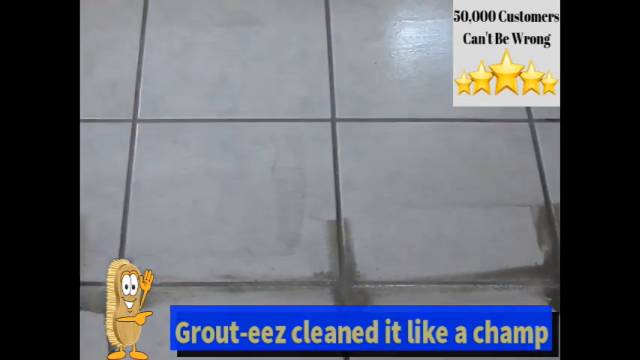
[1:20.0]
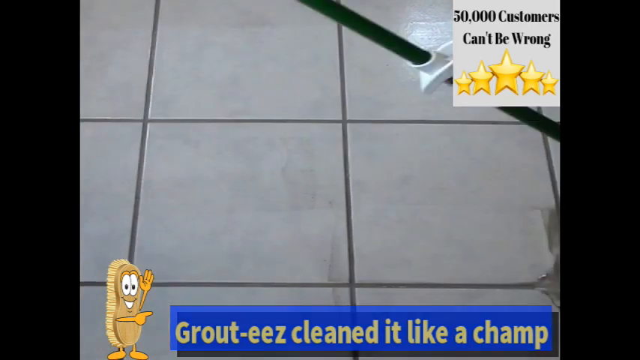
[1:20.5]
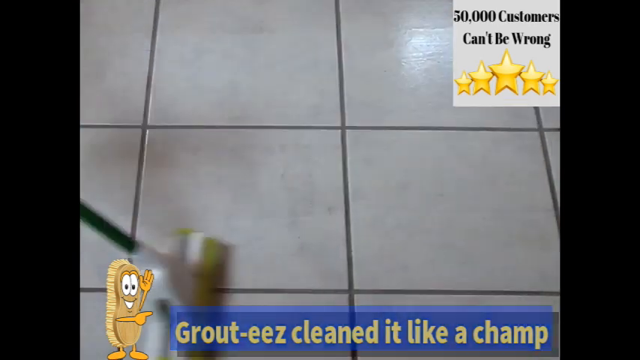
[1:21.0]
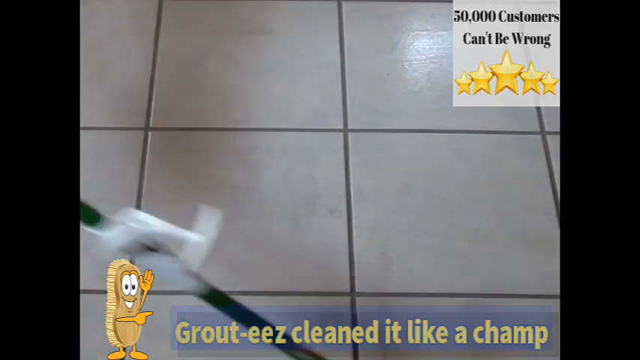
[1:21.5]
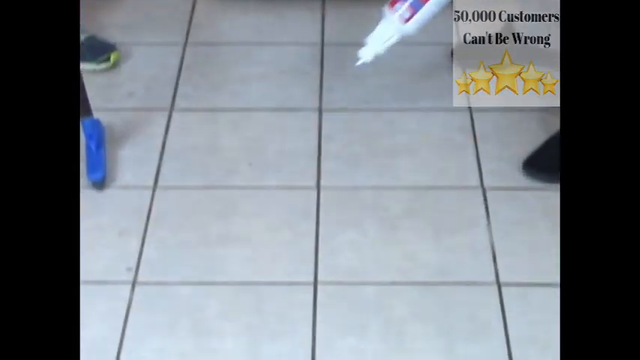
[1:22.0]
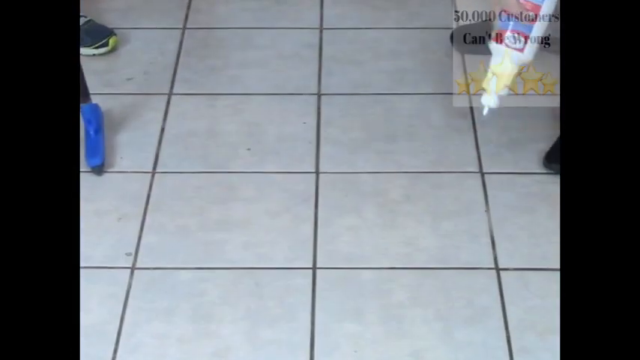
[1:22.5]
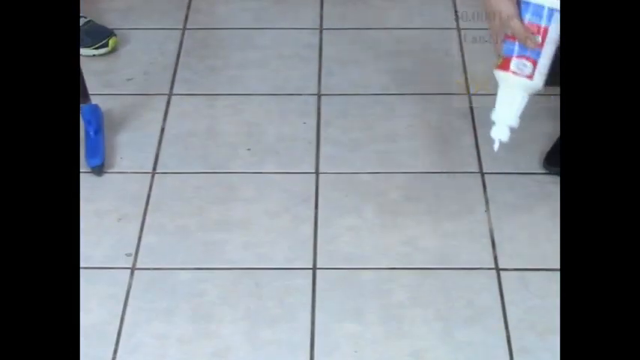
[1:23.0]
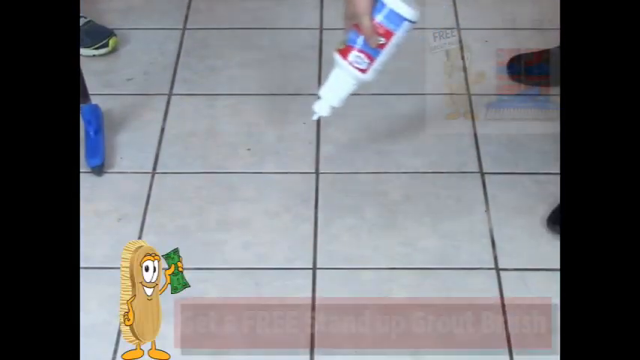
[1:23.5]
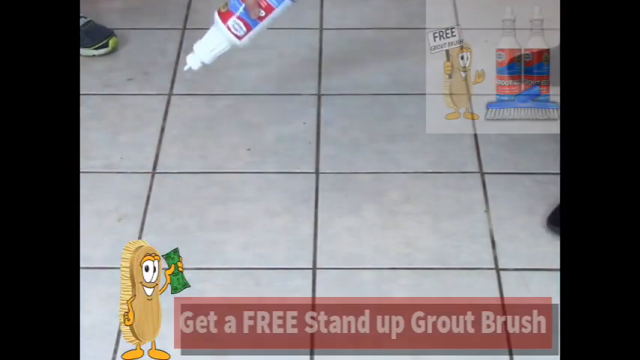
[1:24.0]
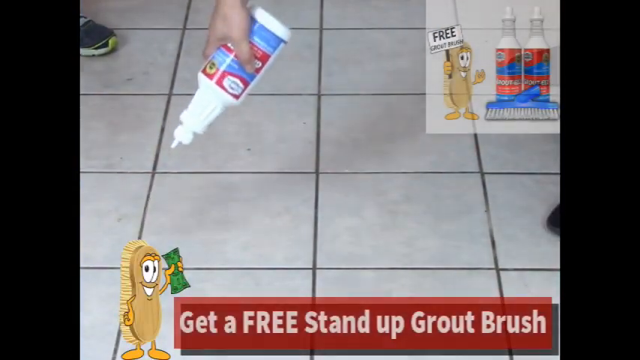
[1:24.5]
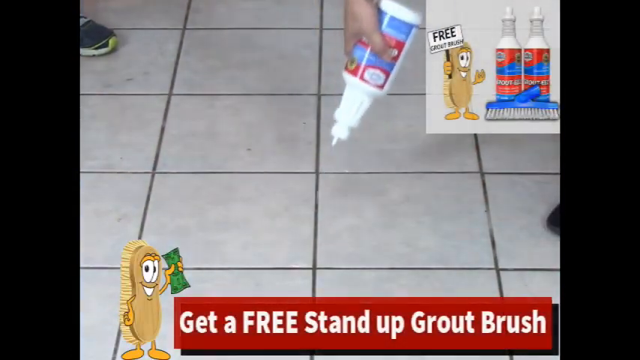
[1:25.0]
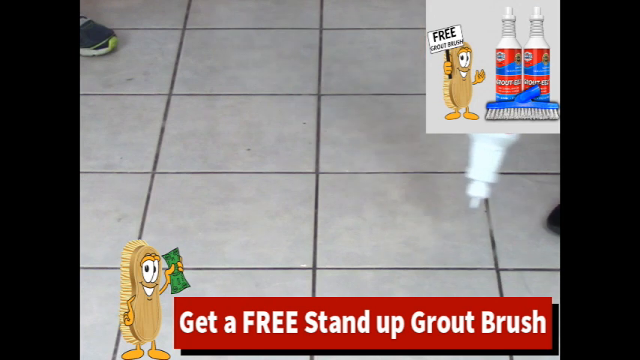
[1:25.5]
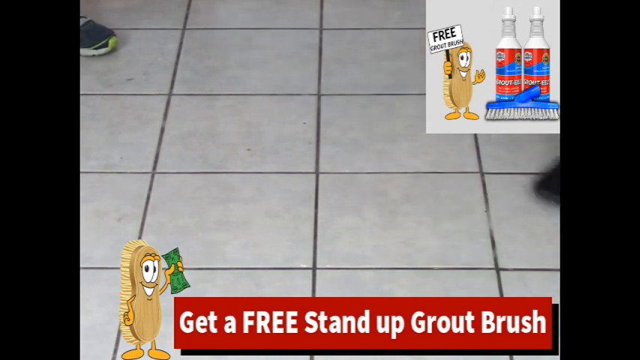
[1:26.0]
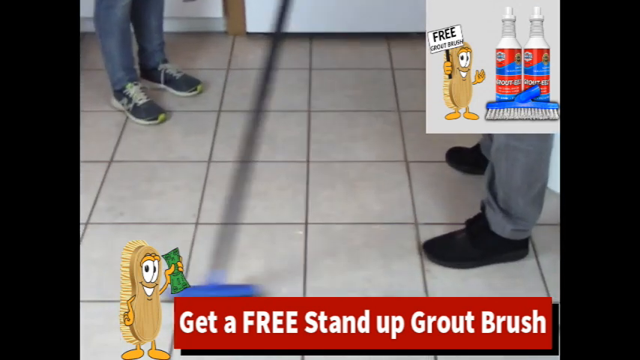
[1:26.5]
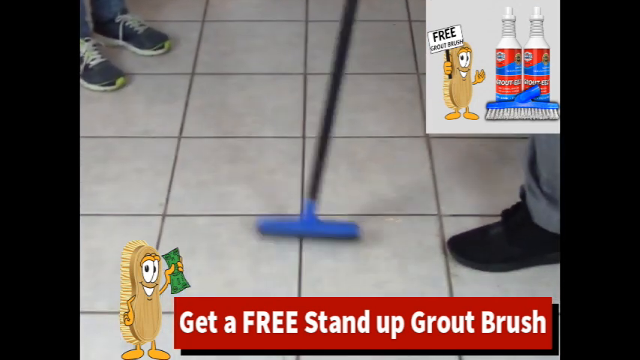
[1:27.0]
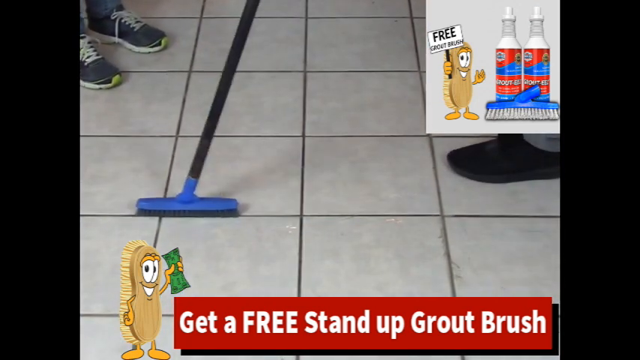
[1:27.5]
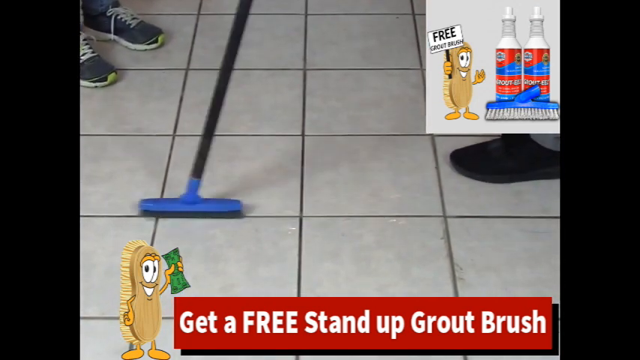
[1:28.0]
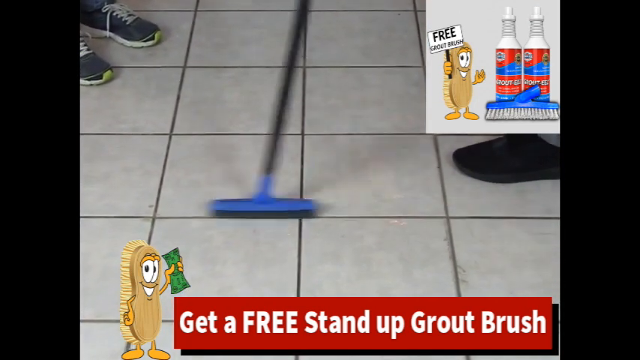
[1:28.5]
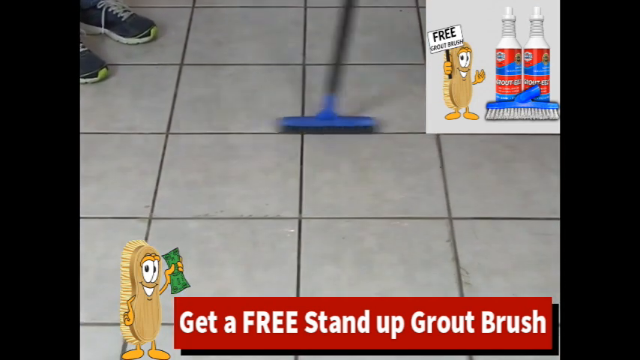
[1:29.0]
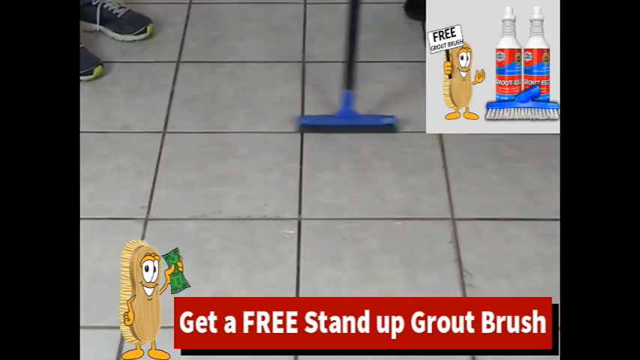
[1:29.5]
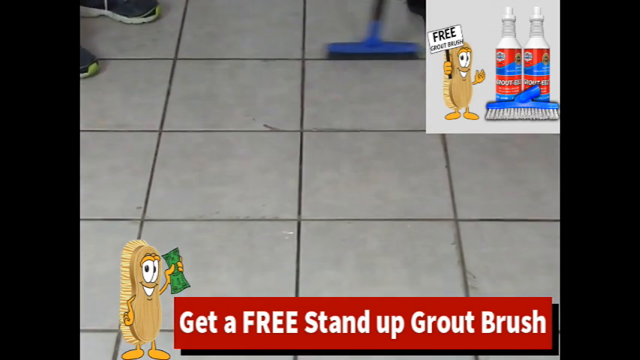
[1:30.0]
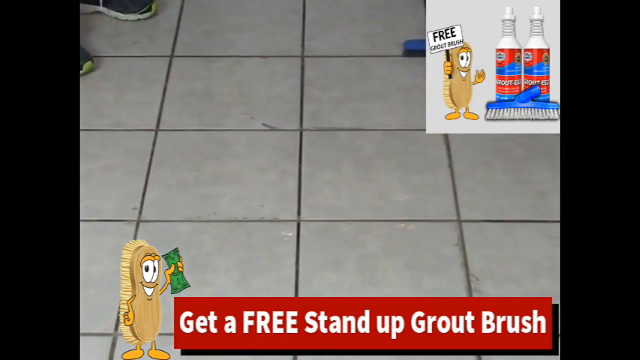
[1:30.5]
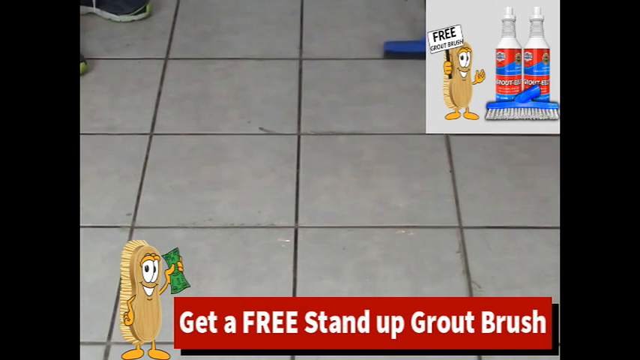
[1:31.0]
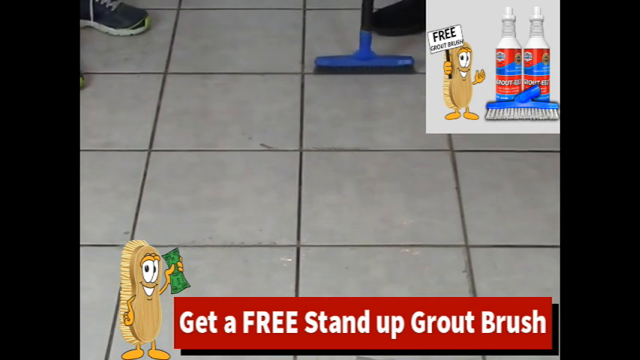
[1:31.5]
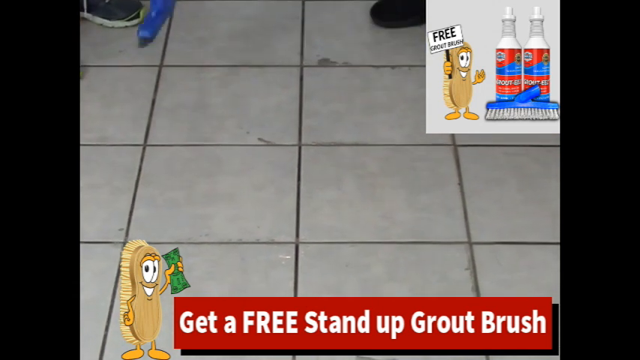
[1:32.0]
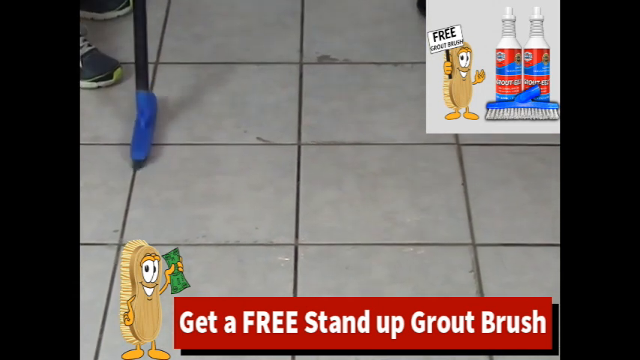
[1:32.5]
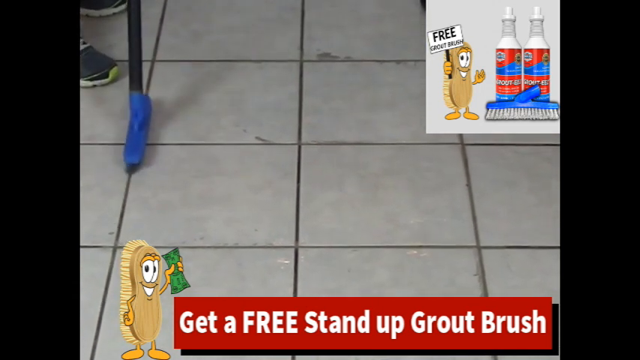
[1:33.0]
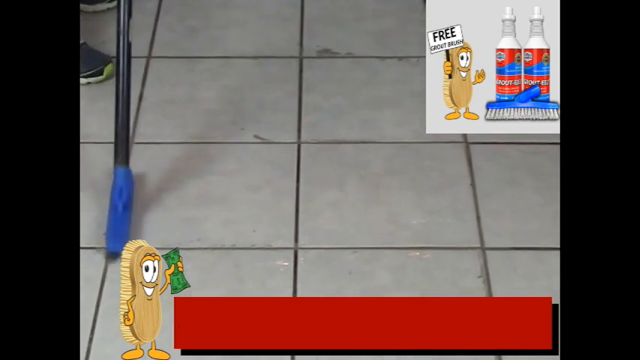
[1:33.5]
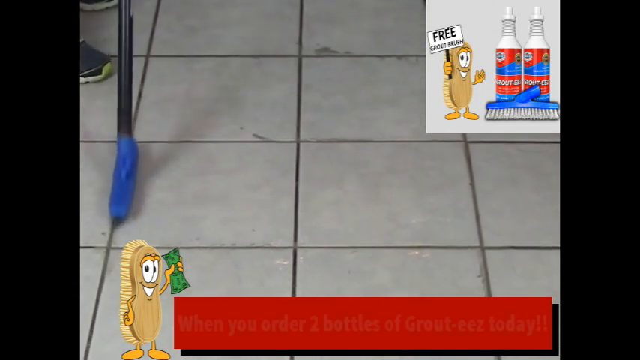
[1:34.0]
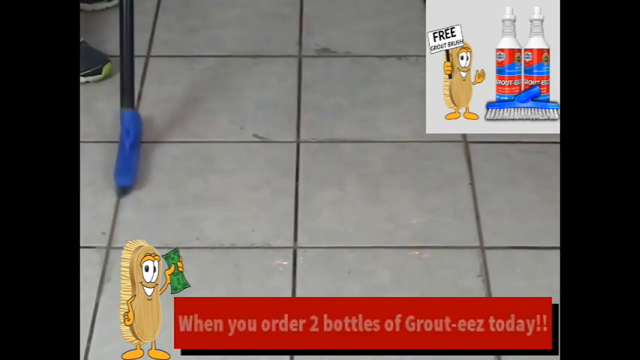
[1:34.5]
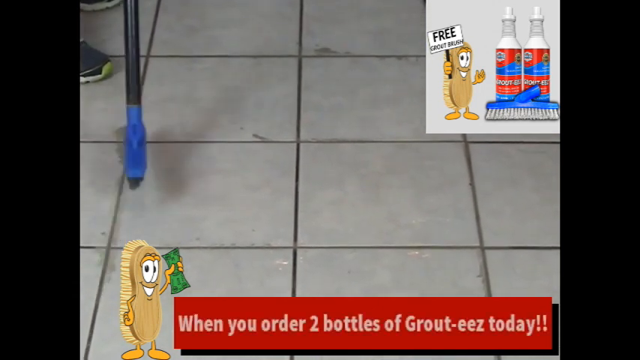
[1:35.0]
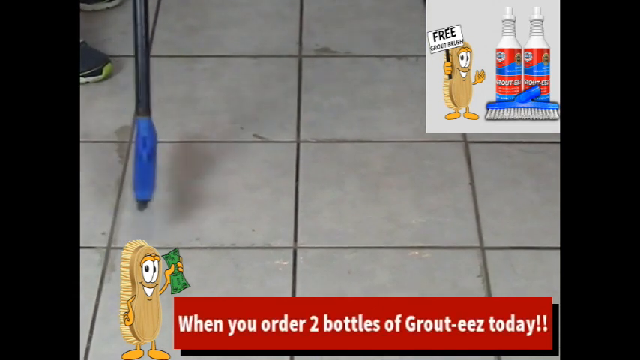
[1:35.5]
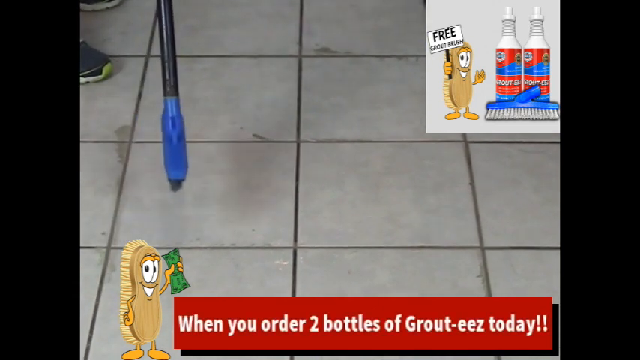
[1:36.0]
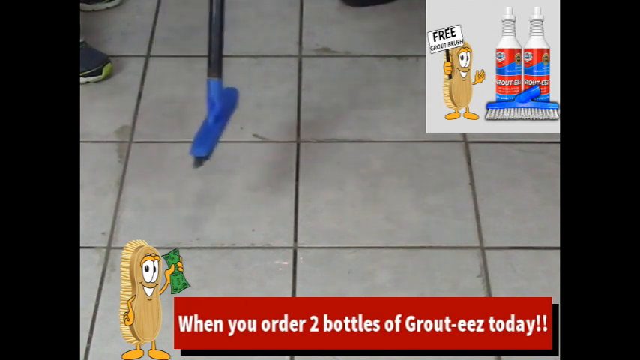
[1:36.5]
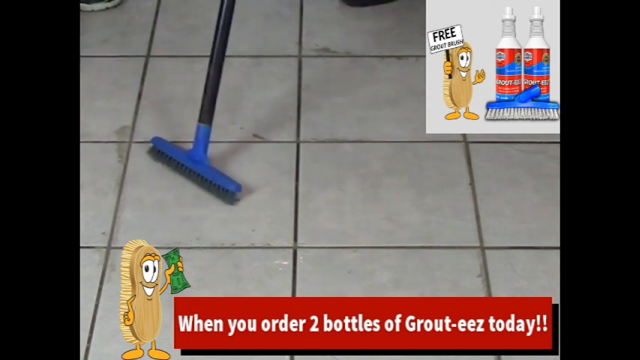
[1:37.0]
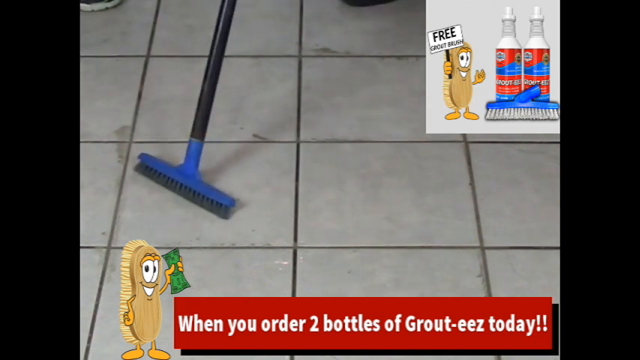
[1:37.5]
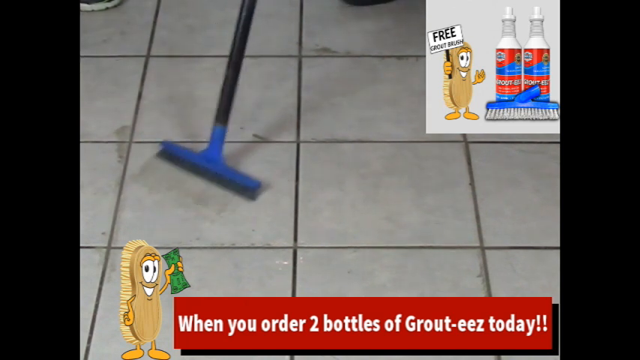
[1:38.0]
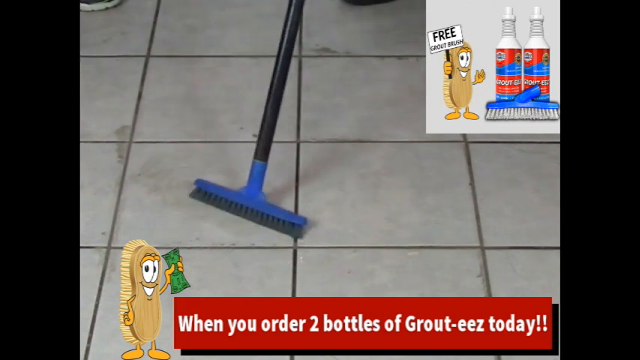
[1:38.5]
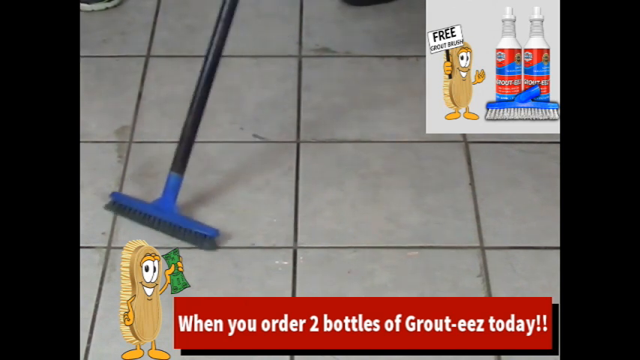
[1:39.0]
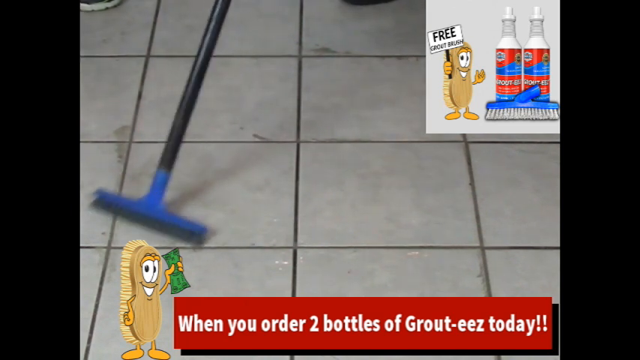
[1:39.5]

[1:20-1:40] The gray tile has darker gray grout. At the top right is a white box with black lettering reading "50,000 customers can't be wrong," with five gold stars just below; the center star is the largest and they get smaller toward the left and right. A blue box at the bottom says in white lettering "grout, easy, clean, like a champ." A brown brush on the left side has brown bristles, yellow hands, yellow feet, black-dotted eyes and white teeth. She uses a green- and white-handled mop with an orange rounded sponge. She then holds a white bottle with a red and blue label and squeezes it onto the grout. A red box appears at the bottom with white lettering saying "get a free stand up brush." On the left side is a brown brush with brown bristles that has orange hands, one of them holding a green dollar bill, orange feet, black-dotted white eyes and white teeth. The same brush is in the white box at the top right, holding a sign on a black stick with a white box and black lettering reading "free grout brush." There are two white-tipped, red and blue bottles with white lettering and a blue brush with gray bristles below them. A white-handed person squeezes a bottle, and there is someone with black shoes and gray pants, and opposite them someone with runners, blue jeans and white laces. They use the black-handled blue brush to brush the edging of the grout. The white lettering in the red box changes to "when you order two bottles of grout, easy today," and they scratch the tile itself.